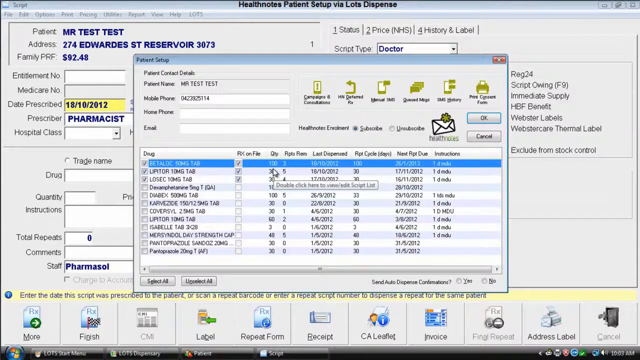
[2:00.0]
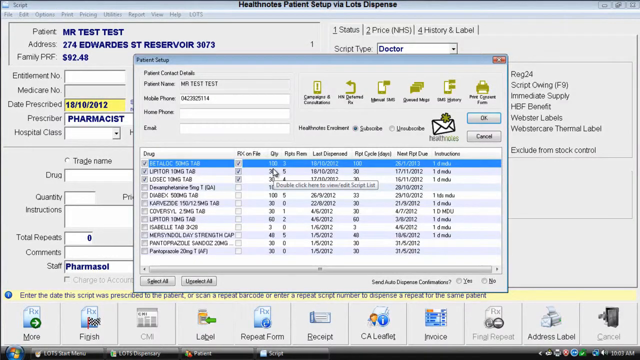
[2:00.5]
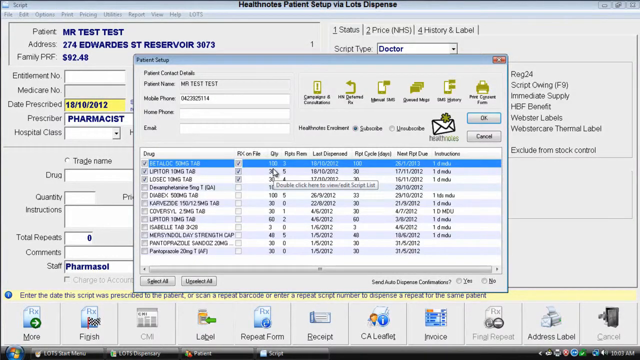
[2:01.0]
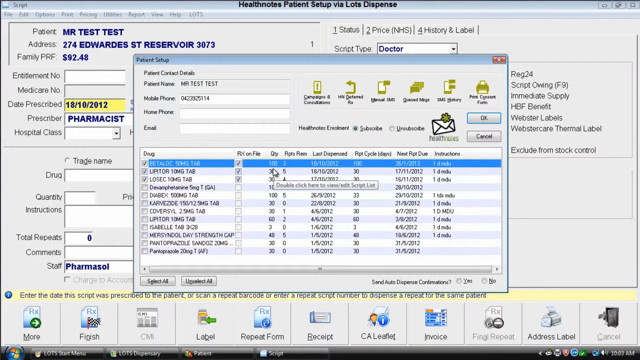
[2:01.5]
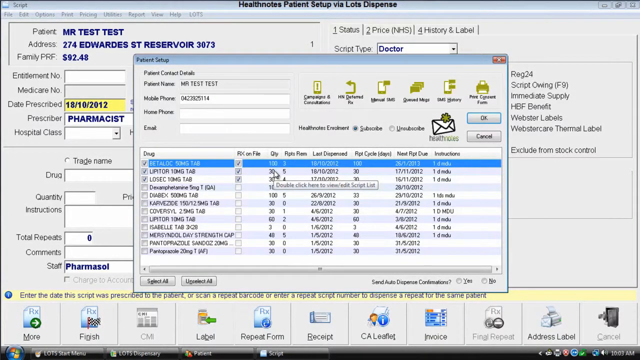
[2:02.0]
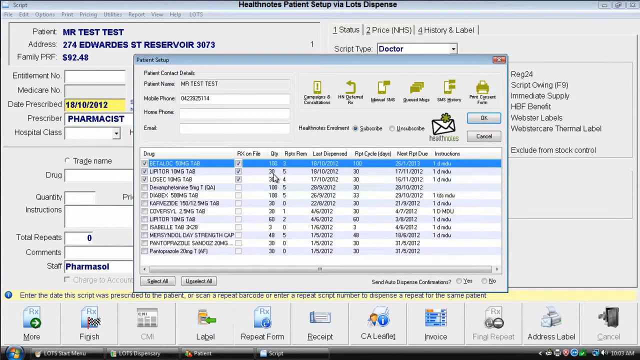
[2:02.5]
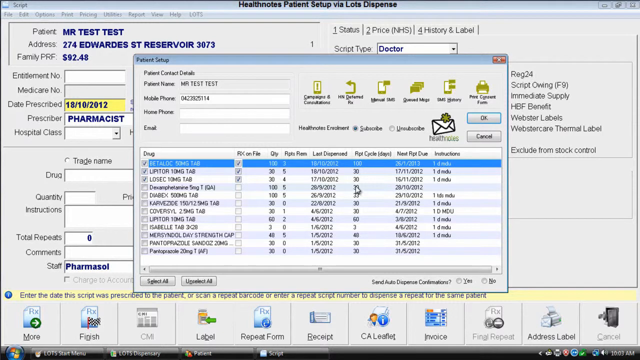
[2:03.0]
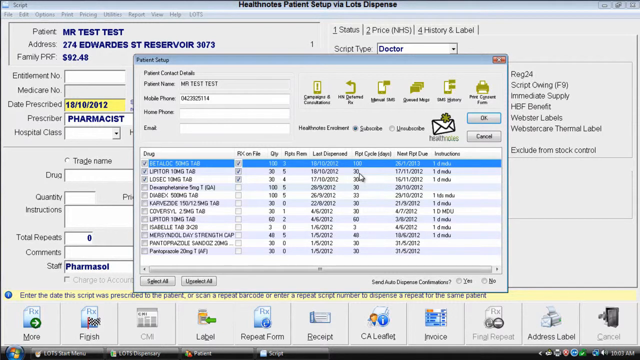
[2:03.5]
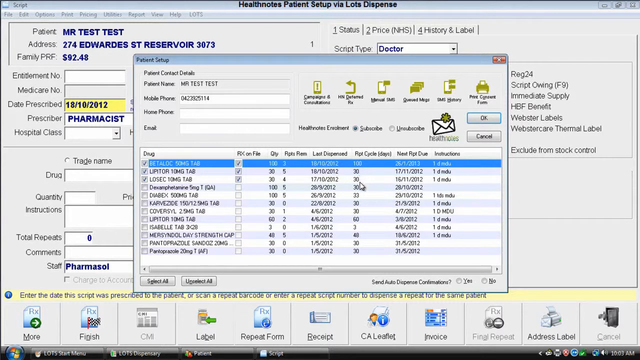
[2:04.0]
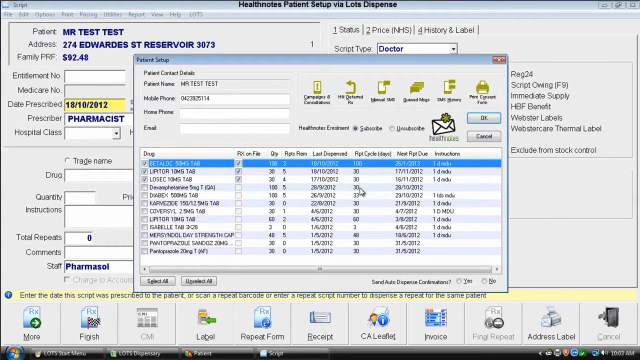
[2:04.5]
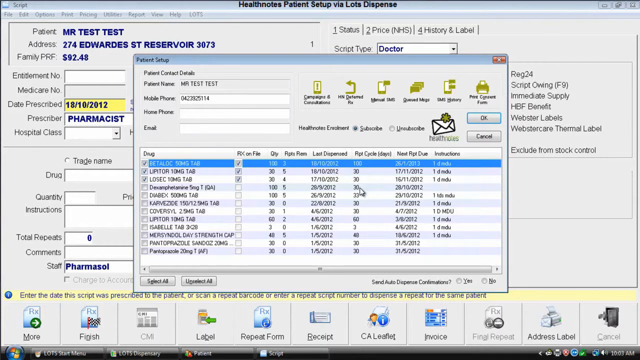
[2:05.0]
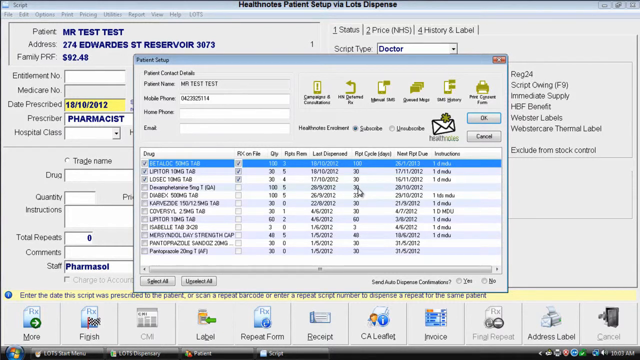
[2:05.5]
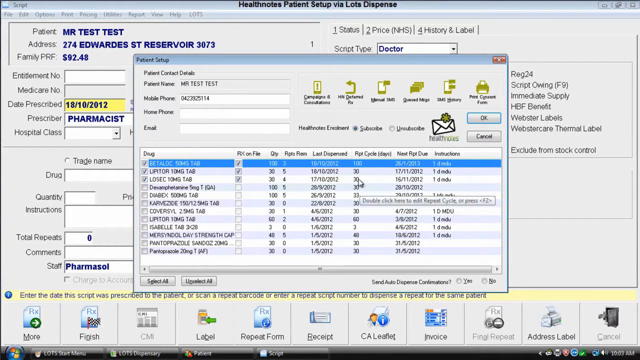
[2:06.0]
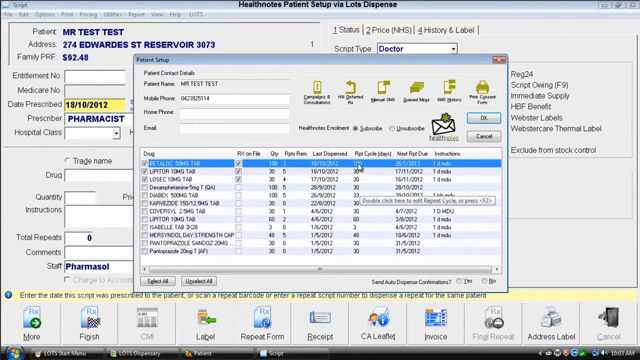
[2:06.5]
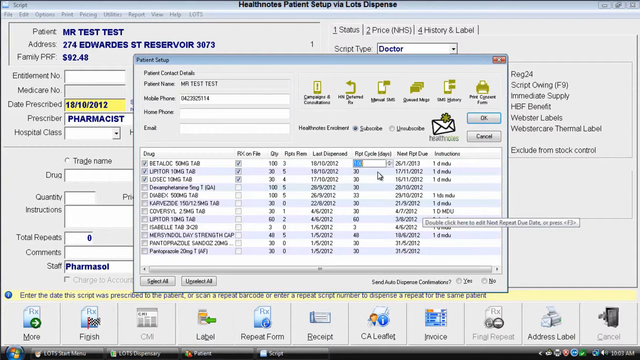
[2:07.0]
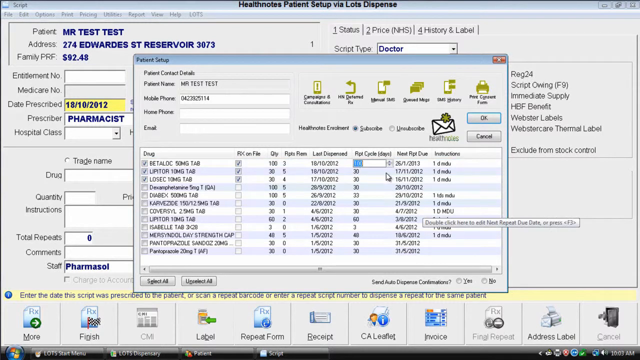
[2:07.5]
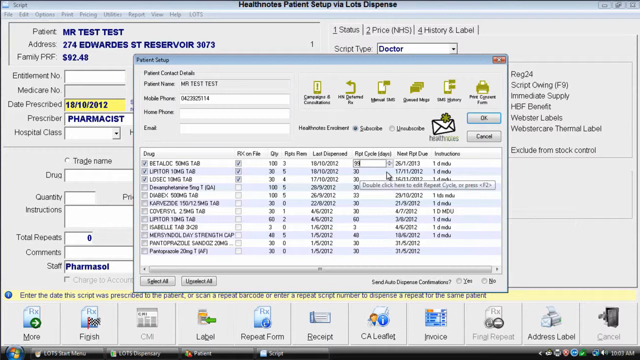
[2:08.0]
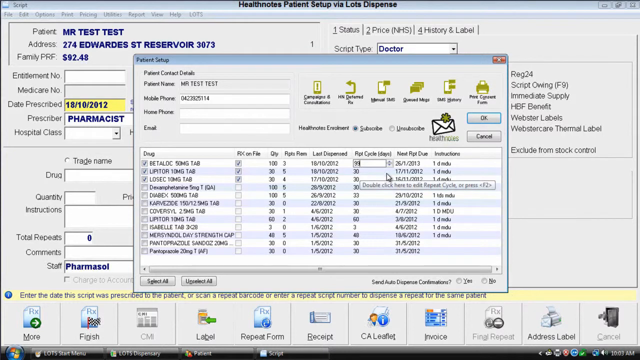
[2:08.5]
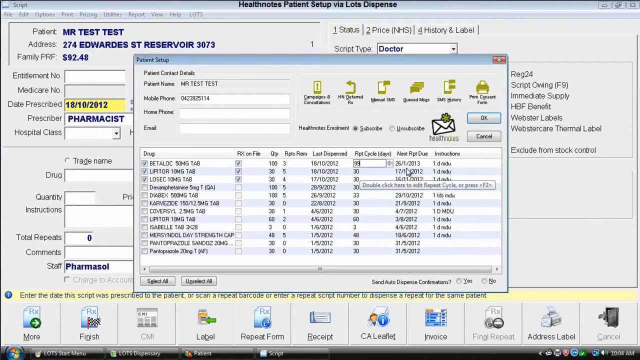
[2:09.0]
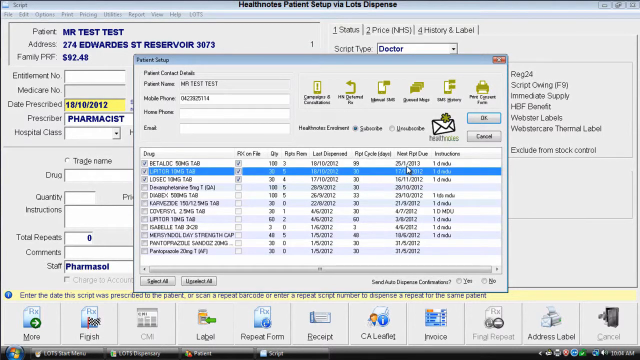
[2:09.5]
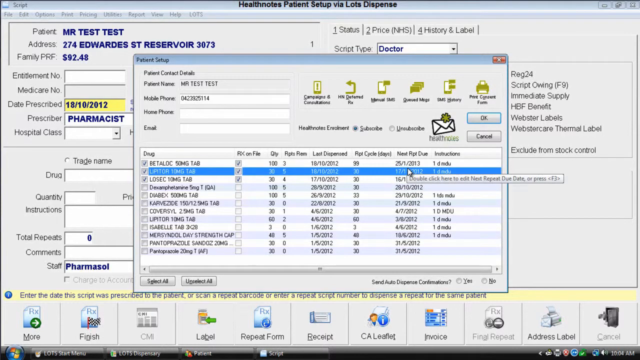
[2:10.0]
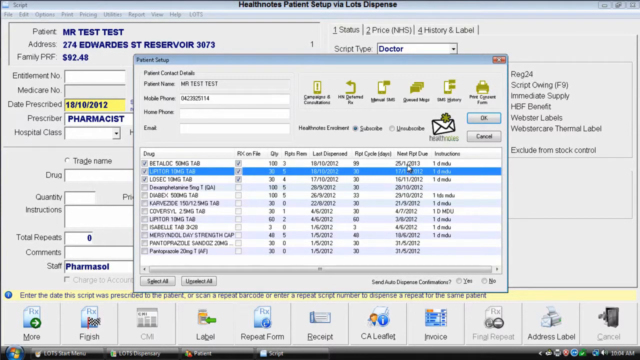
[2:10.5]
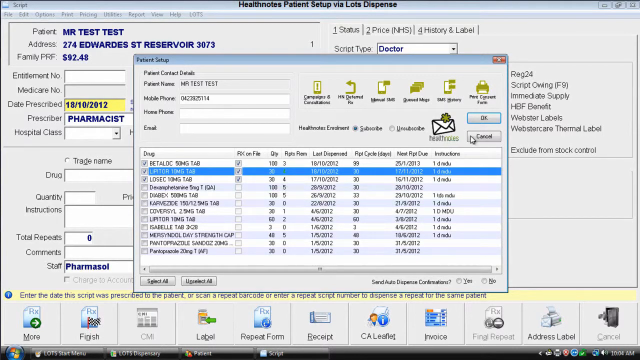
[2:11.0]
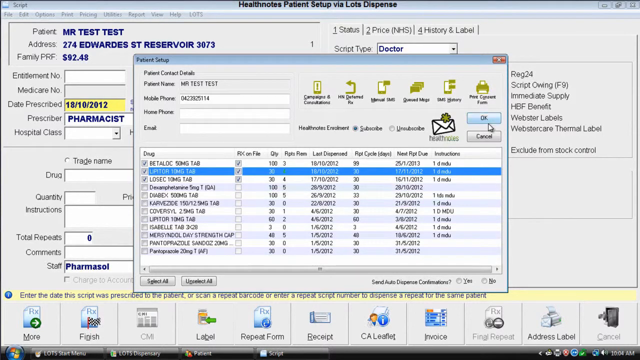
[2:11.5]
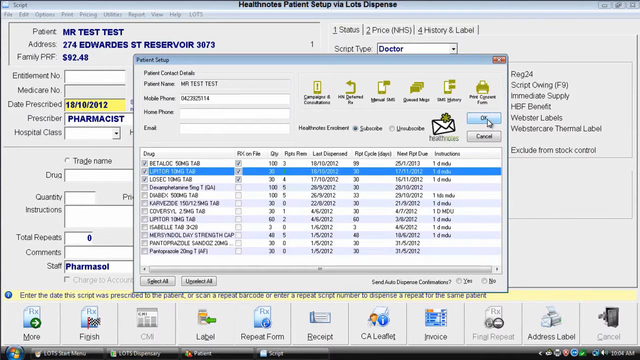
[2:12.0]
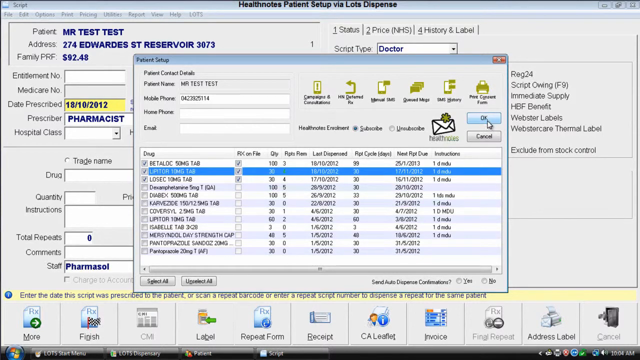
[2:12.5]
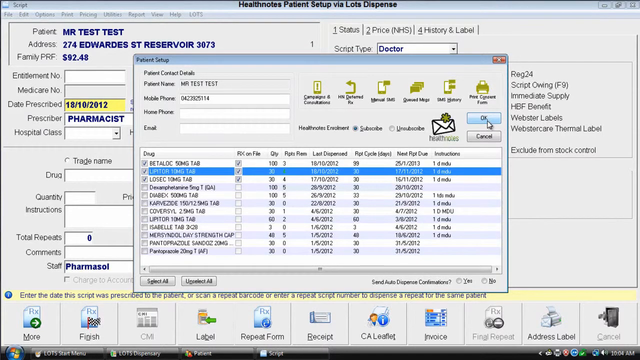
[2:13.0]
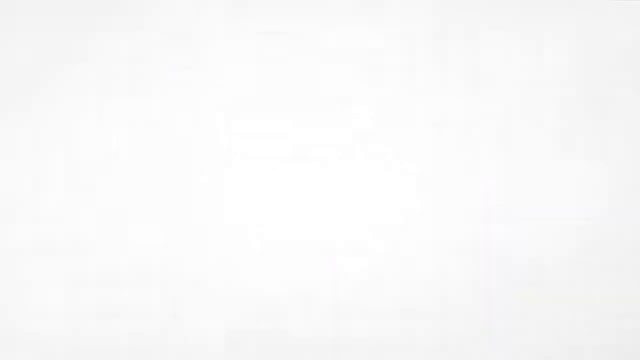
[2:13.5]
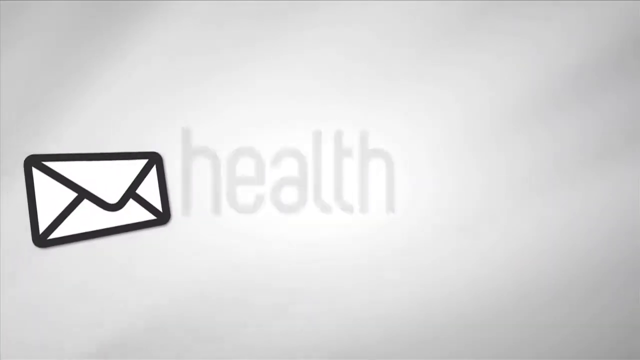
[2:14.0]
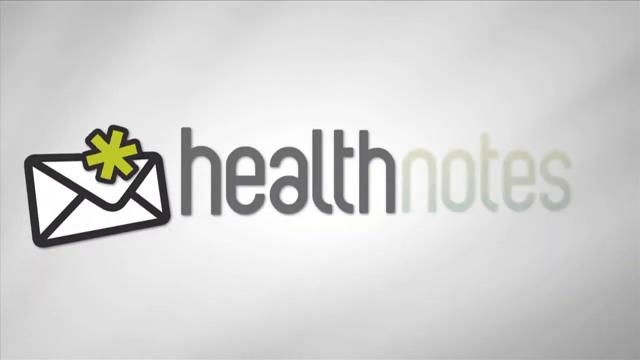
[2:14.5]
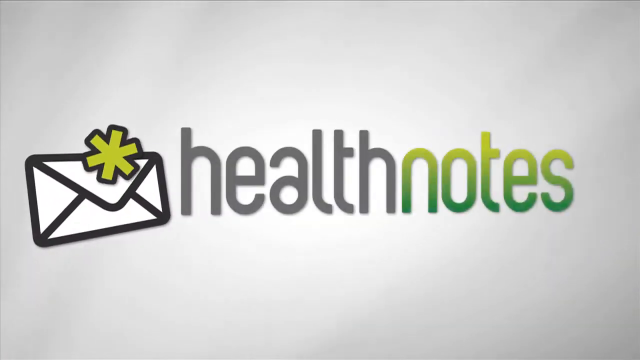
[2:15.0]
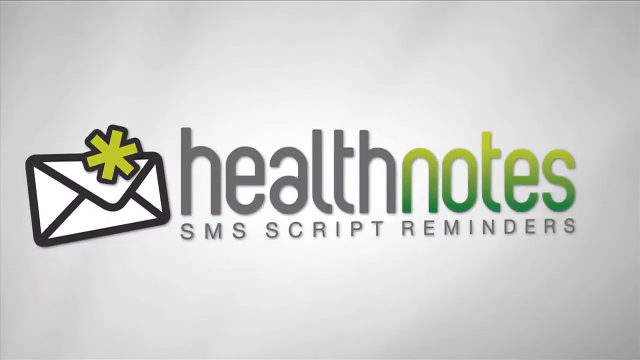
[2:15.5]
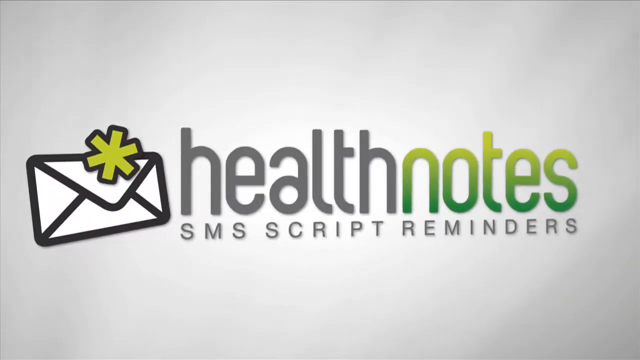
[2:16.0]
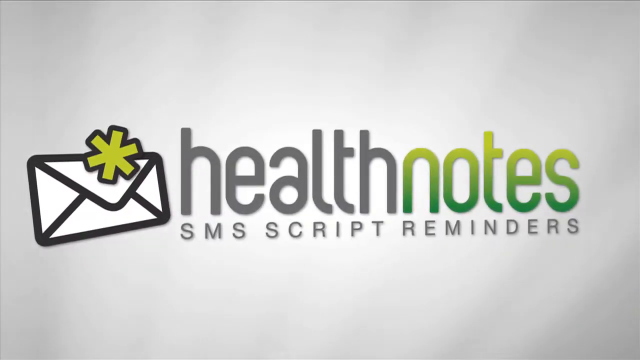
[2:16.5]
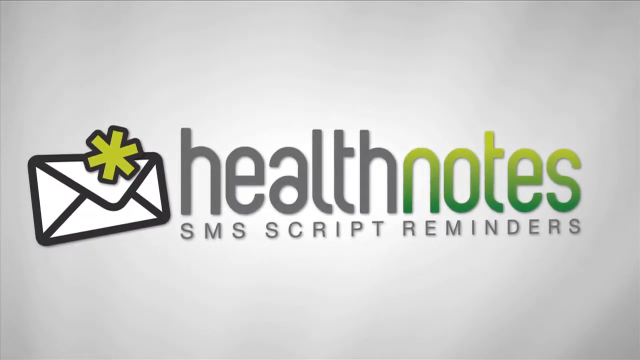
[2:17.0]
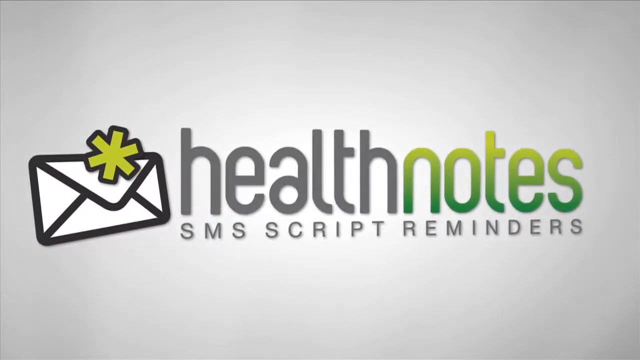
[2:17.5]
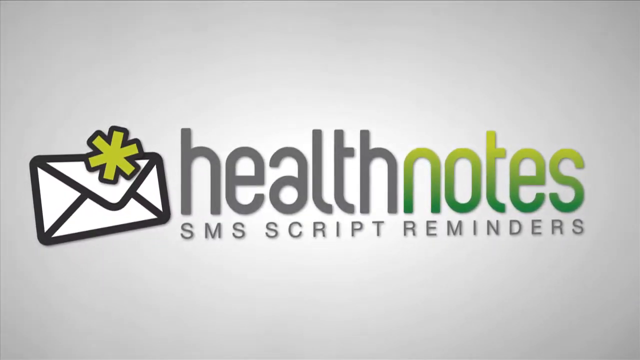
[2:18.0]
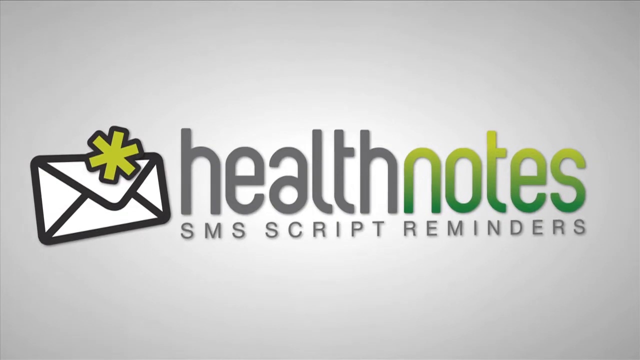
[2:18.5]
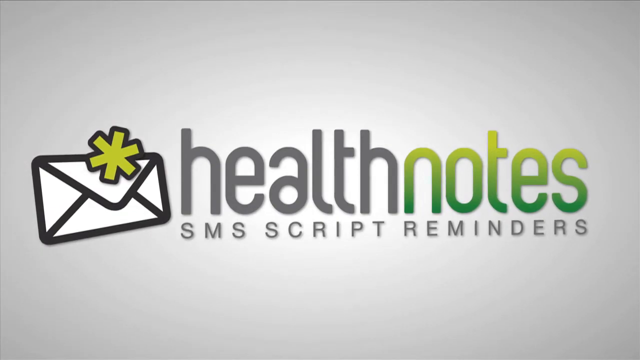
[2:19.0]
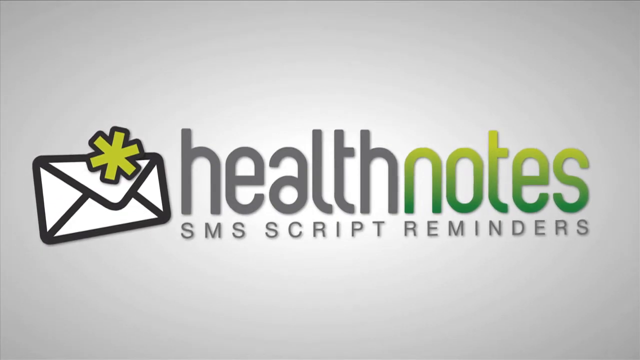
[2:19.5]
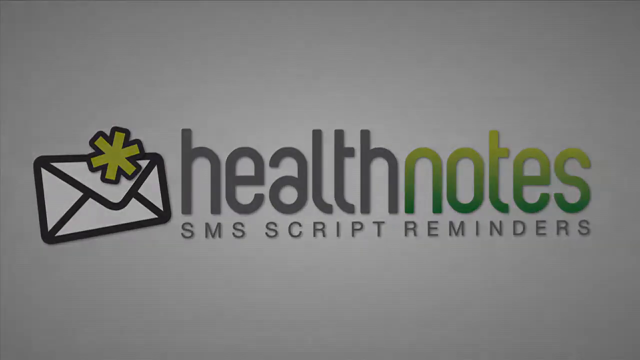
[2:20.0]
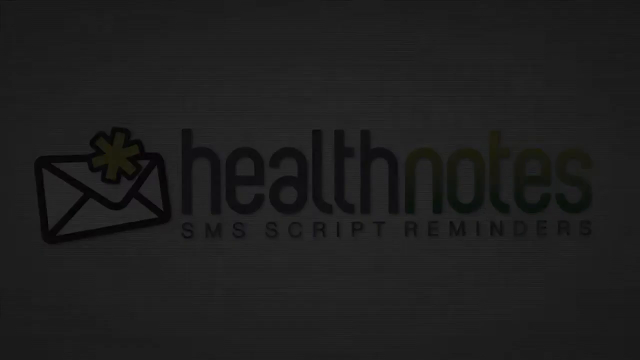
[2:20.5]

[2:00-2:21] The patient setup screen appears once again, with check marks next to the first three drugs. The user seems to hover over the repeat cycle days column, going down the list. At the top is the highest number, 100 days, for the drug Betaloc; underneath, Lipitor and Losec both have repeat cycles of 30 days, and most other drugs have 30, 48 or 60 day cycles. The user clicks on the number for Betaloc under the column "Rpt Cycle days," changes it from 100 to 99, and hits OK. At the end of the video, the HealthNotes company logo appears with its envelope and the tagline "SMS Script Reminders."